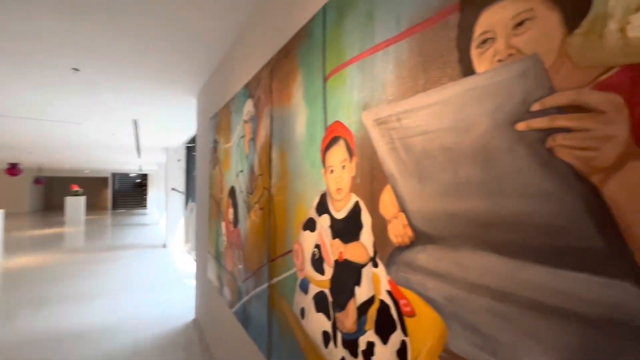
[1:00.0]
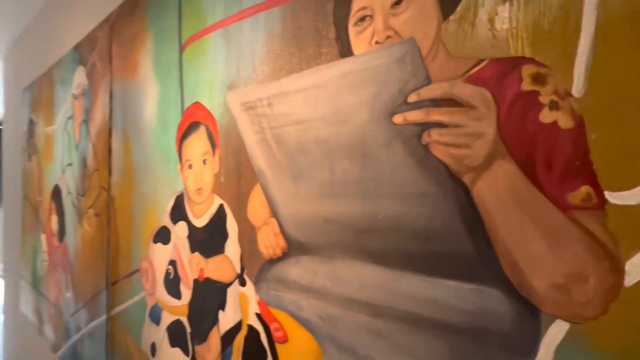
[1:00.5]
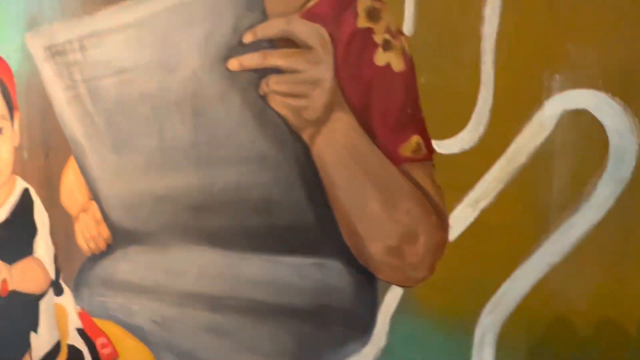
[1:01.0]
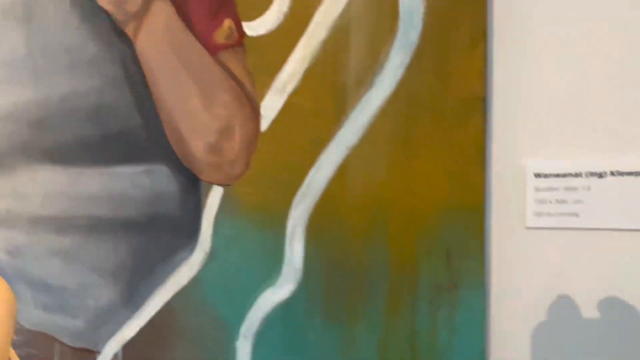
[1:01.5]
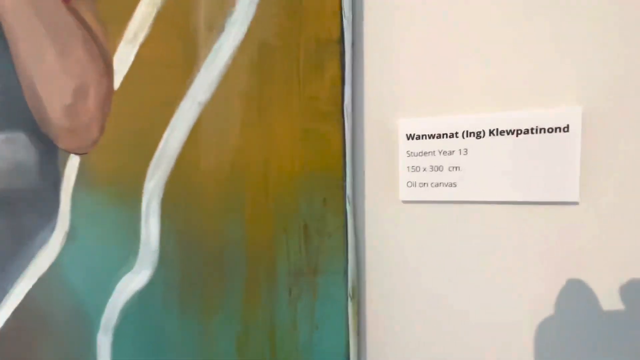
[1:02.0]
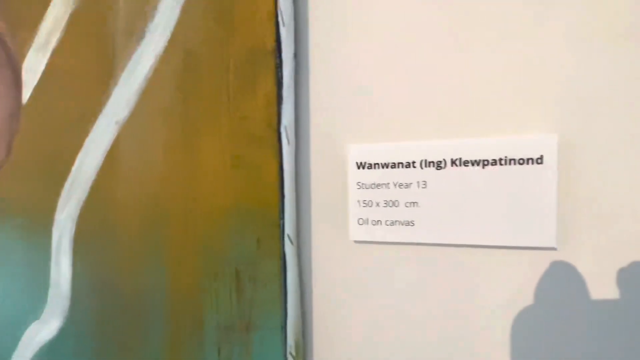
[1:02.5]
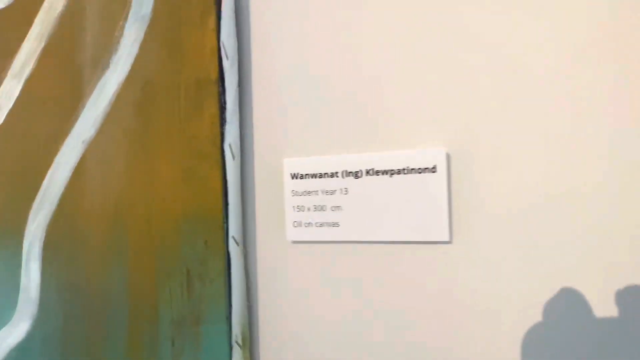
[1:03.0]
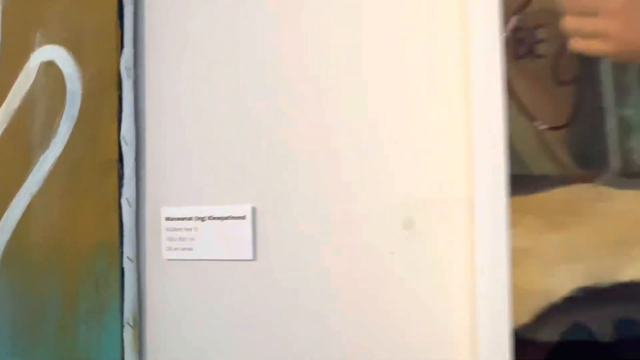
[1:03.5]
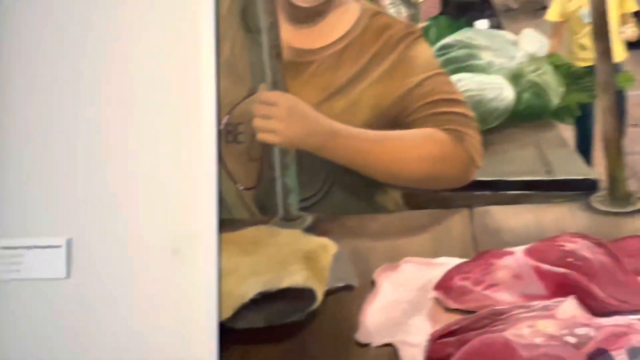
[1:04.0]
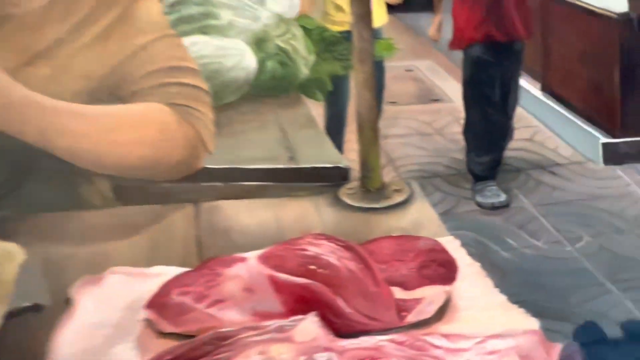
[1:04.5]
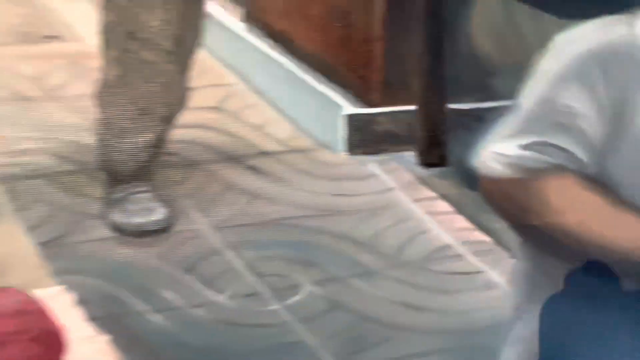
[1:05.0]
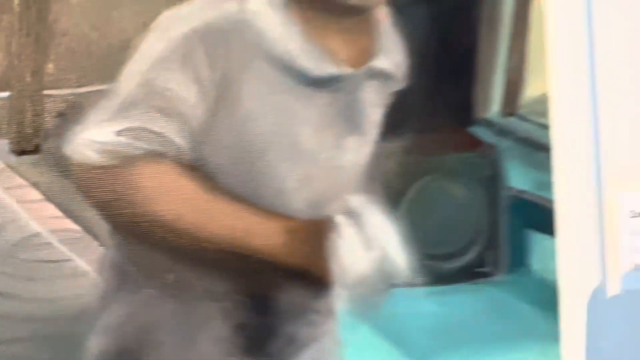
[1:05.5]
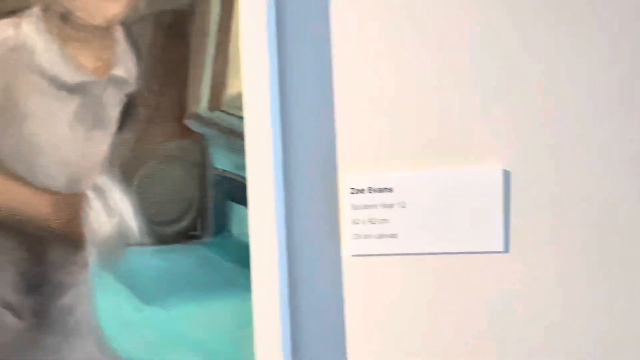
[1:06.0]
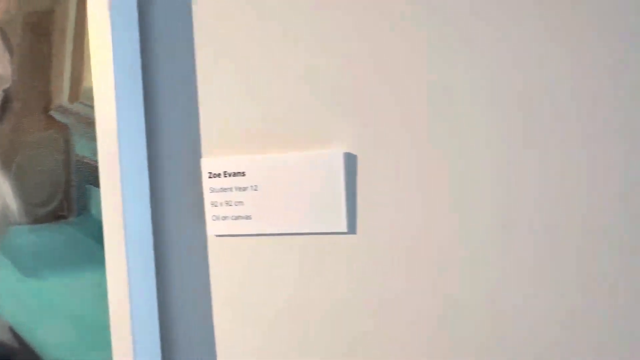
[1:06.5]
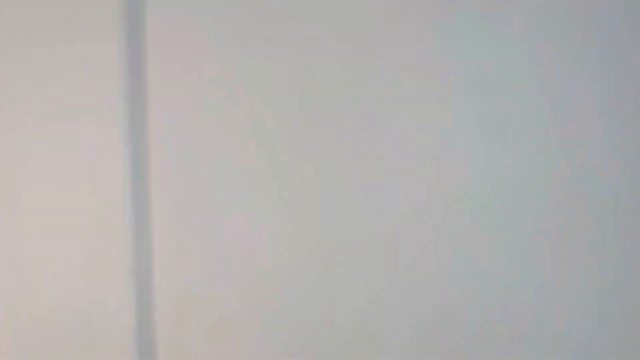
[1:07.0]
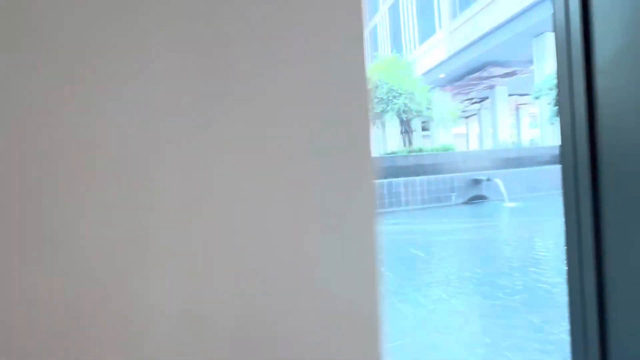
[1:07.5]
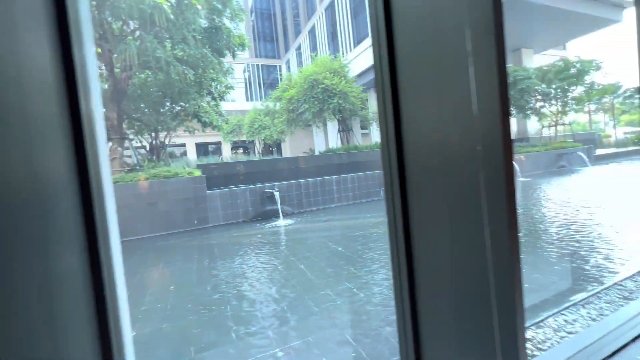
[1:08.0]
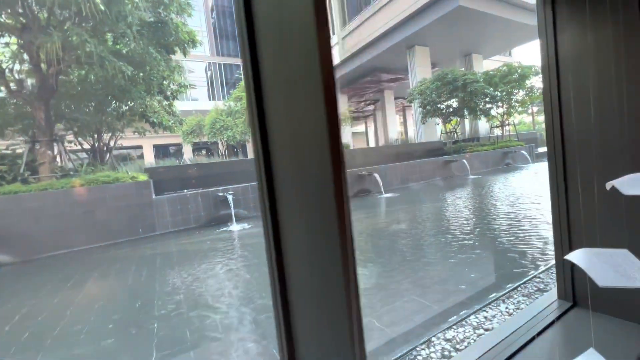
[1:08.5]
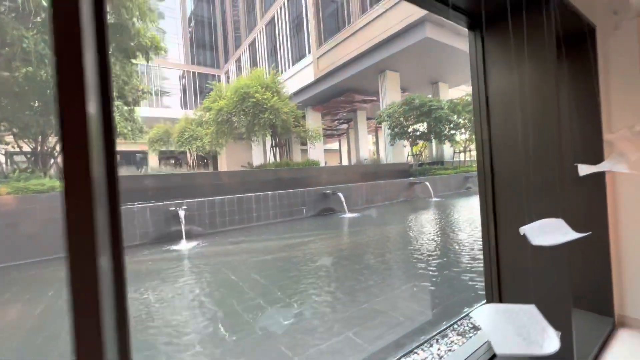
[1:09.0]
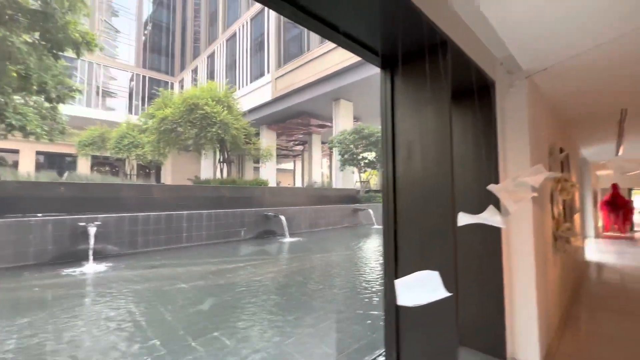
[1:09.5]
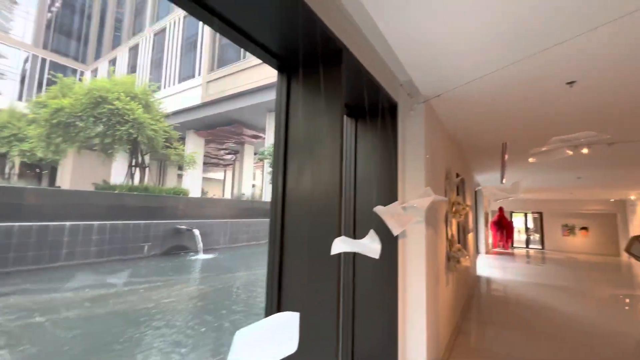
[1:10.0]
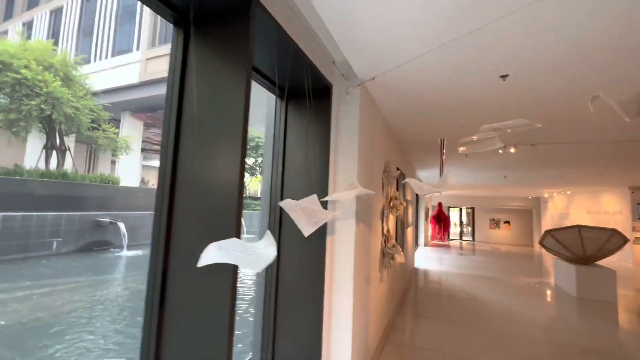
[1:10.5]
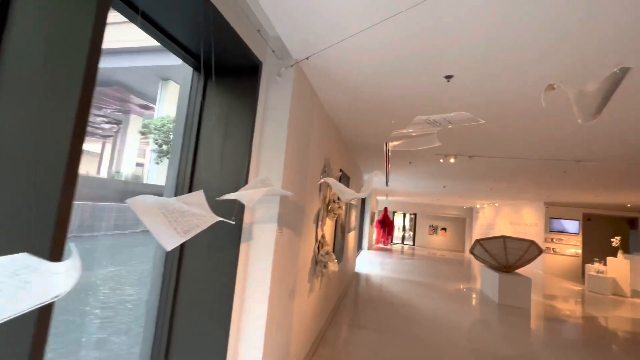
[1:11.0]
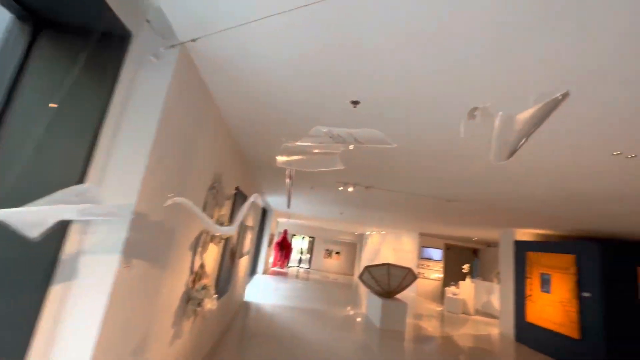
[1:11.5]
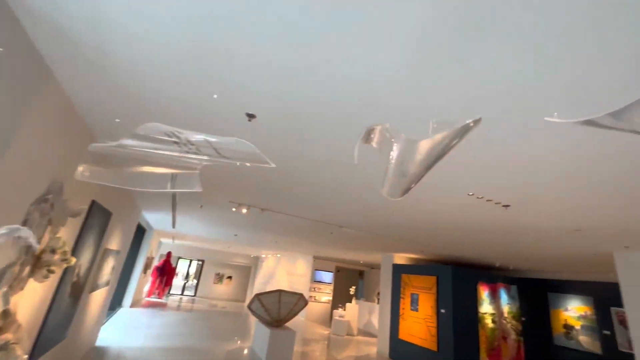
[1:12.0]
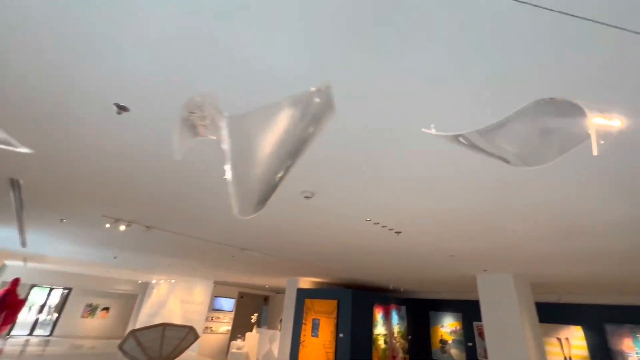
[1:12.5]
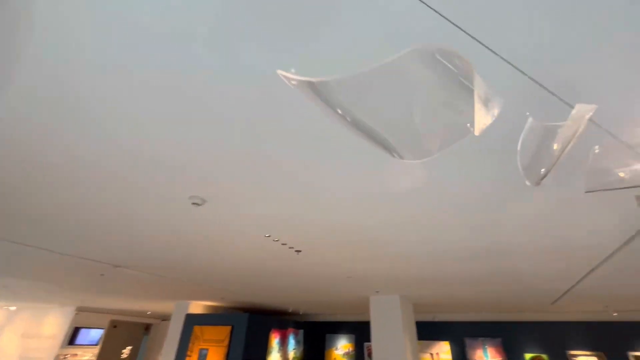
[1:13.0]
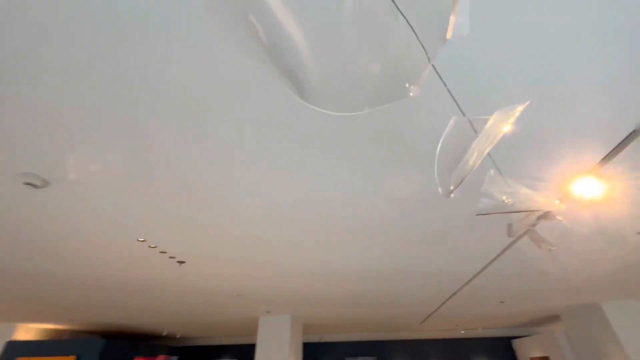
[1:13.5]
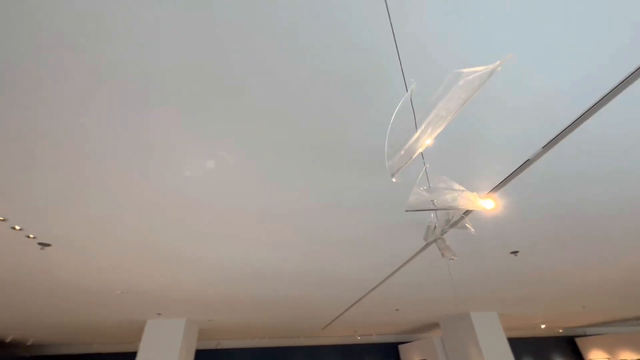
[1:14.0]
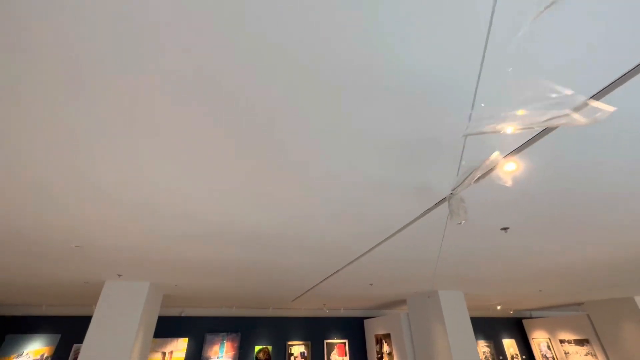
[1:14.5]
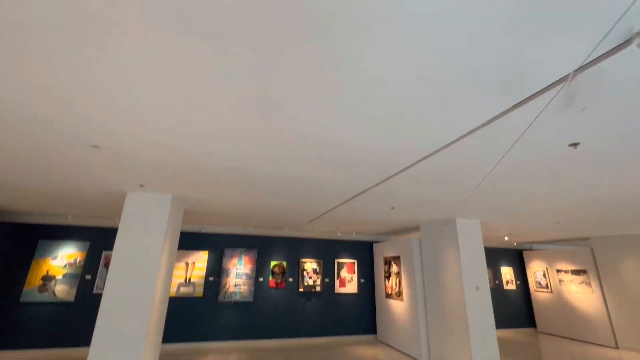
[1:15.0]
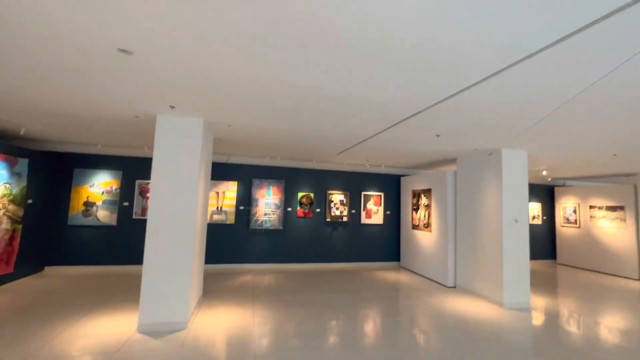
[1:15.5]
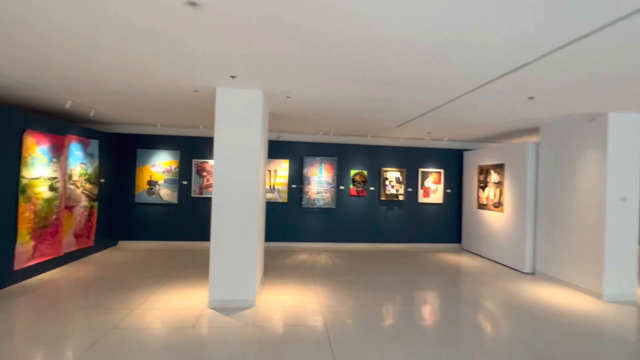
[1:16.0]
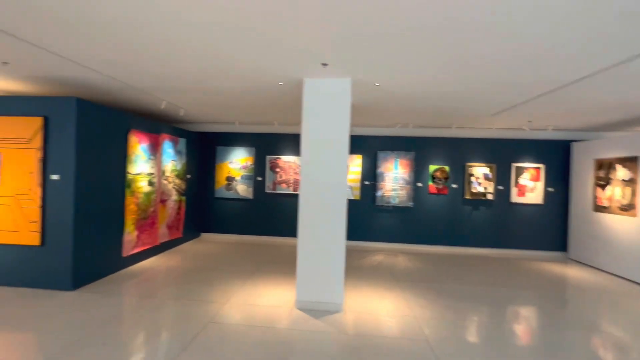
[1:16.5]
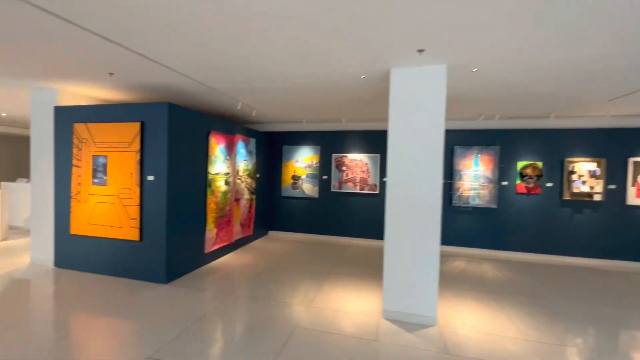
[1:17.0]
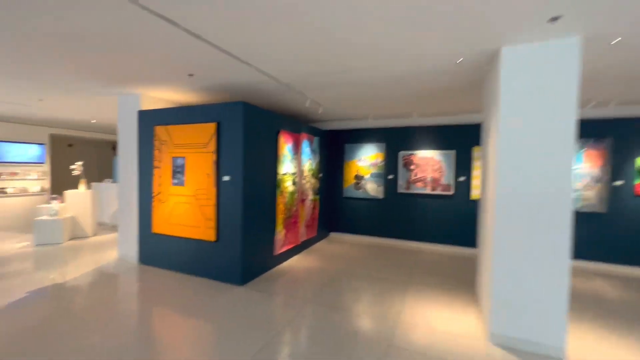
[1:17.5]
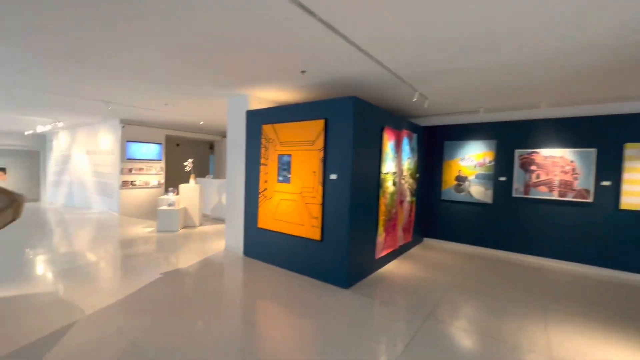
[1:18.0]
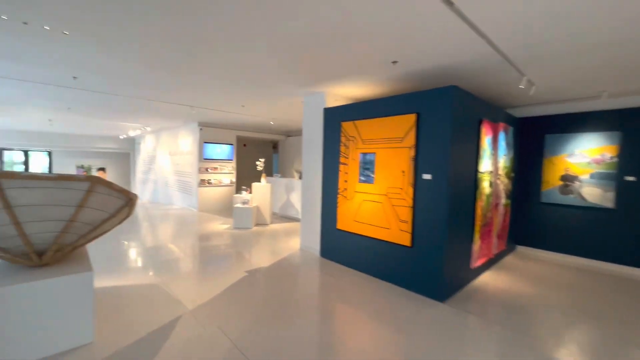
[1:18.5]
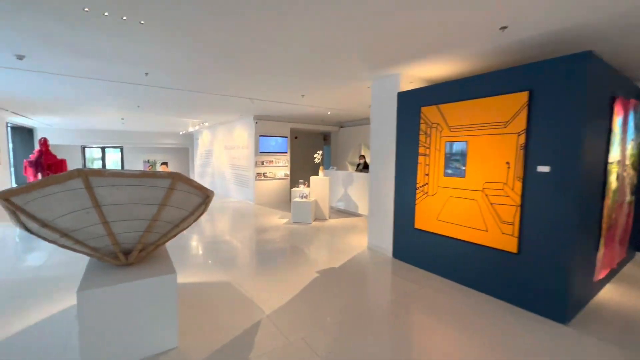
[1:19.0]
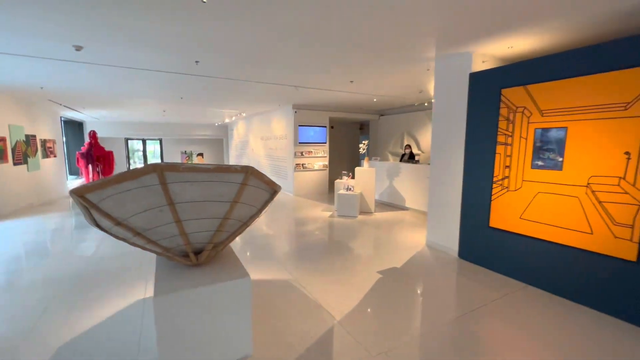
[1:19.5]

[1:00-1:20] The shot starts on a very large picture with a name next to it, then another picture with its name. A glass wall looks out on a pond with flowing water. Some things are hanging from the ceiling, possibly spotlights shining down on the pictures. The museum looks like it could be on the ground floor of a city building, since a very large building that looks like it belongs in a city is visible through the glass windows. The artwork is very colorful, modern and contemporary. The camera pans around. The gallery is set up with individual rooms; the first couple of rooms are all white, and then a room with dark blue walls appears. Modern pictures hang on the walls, each with an individual light on it.